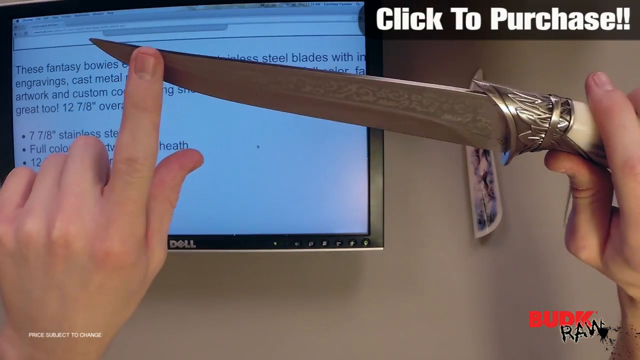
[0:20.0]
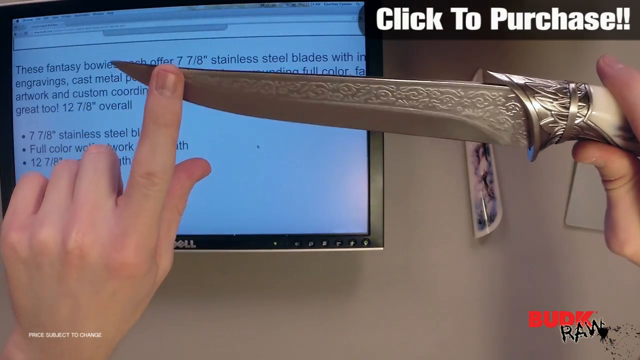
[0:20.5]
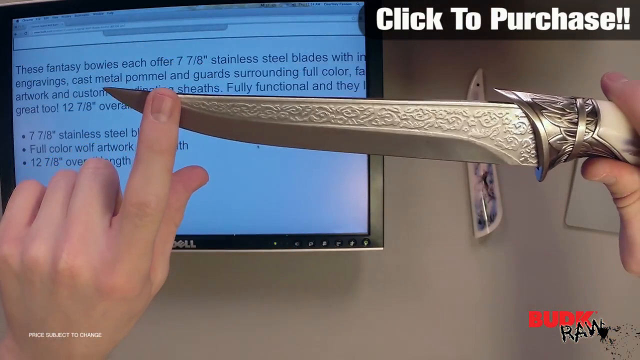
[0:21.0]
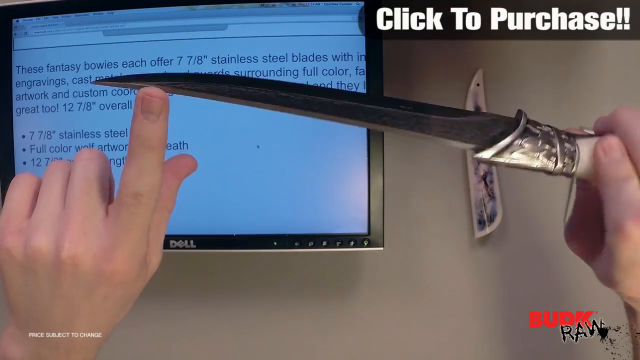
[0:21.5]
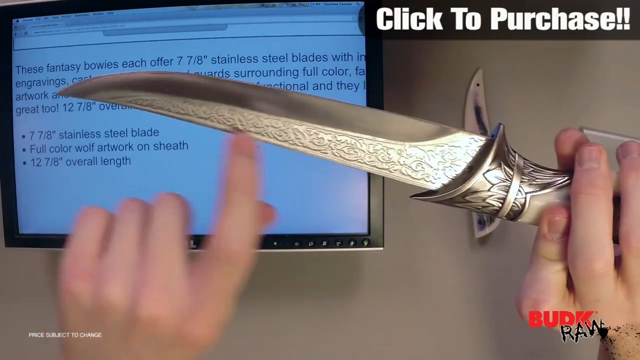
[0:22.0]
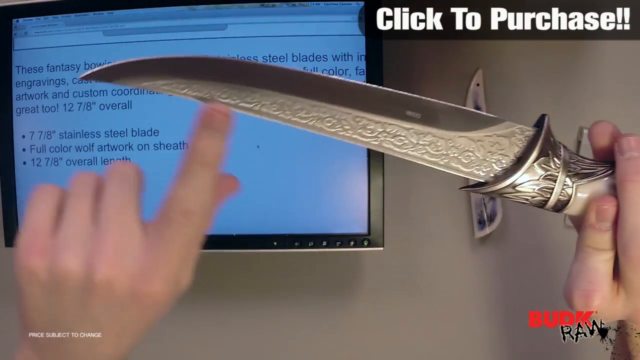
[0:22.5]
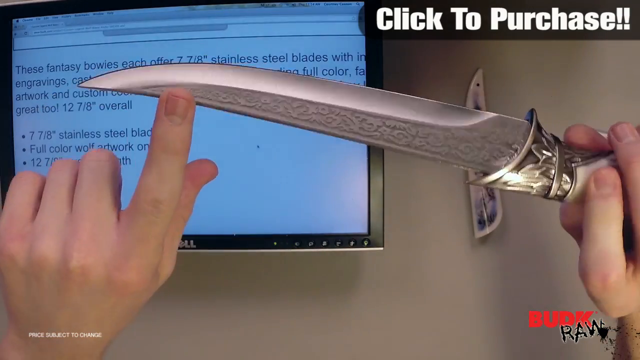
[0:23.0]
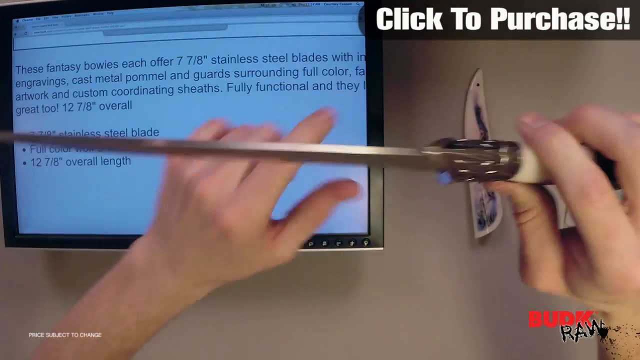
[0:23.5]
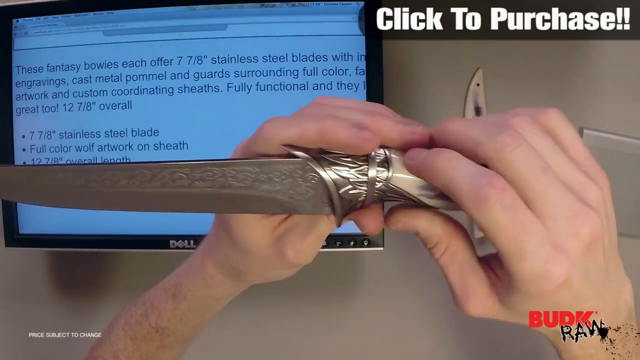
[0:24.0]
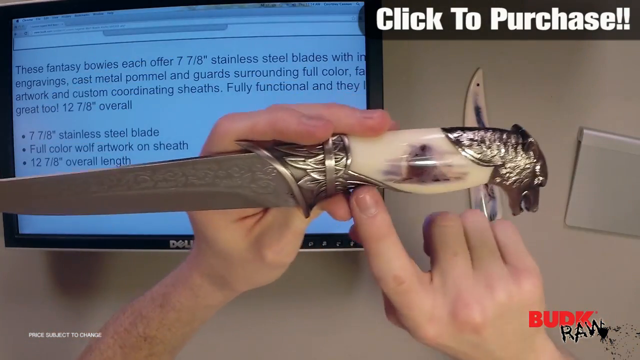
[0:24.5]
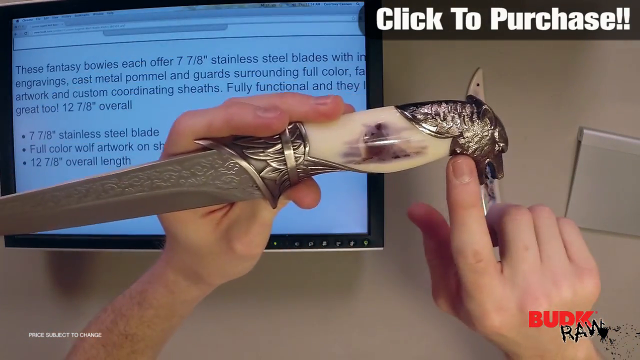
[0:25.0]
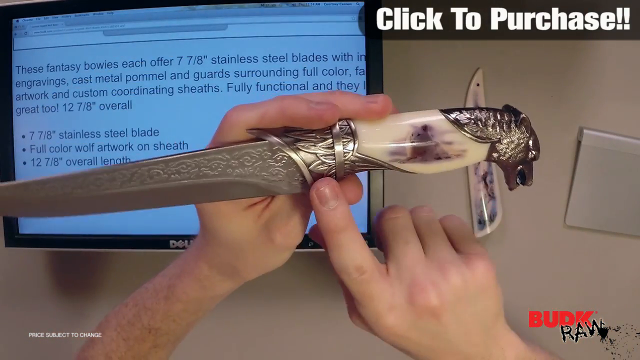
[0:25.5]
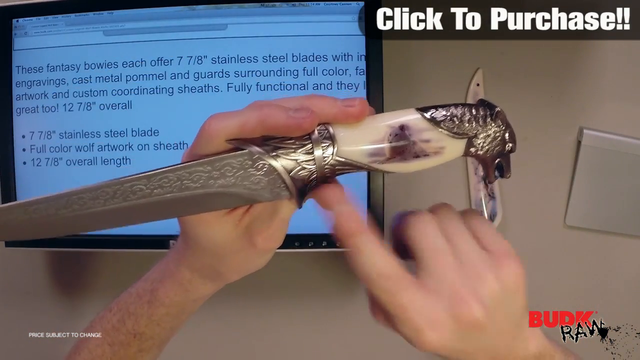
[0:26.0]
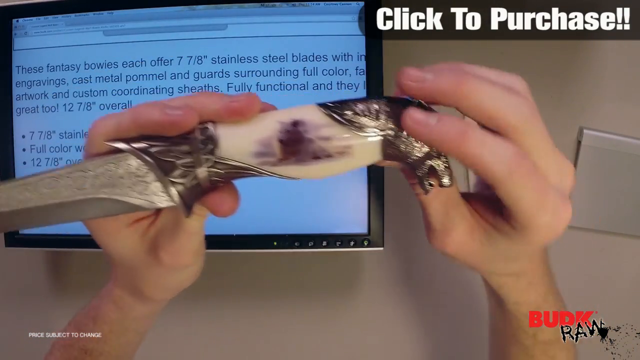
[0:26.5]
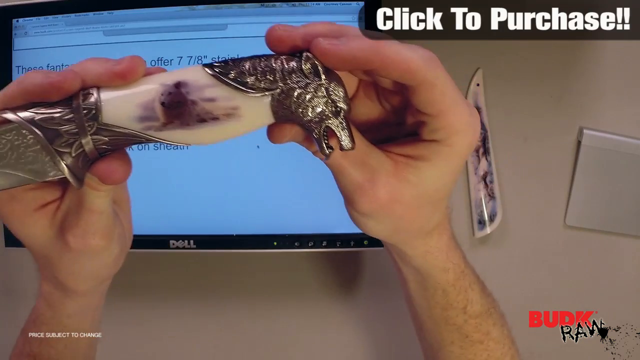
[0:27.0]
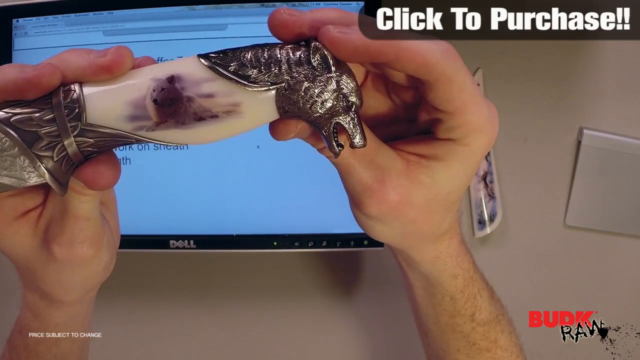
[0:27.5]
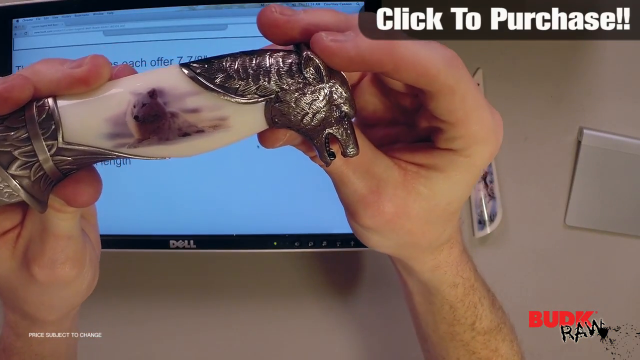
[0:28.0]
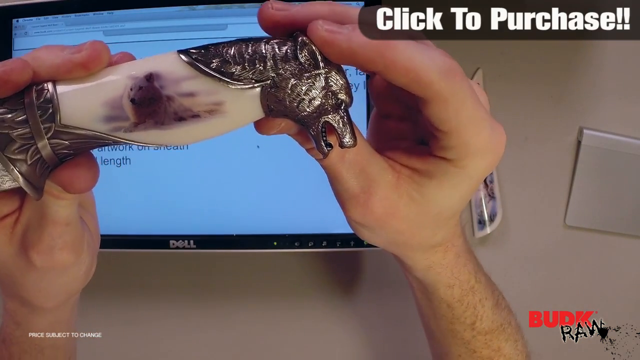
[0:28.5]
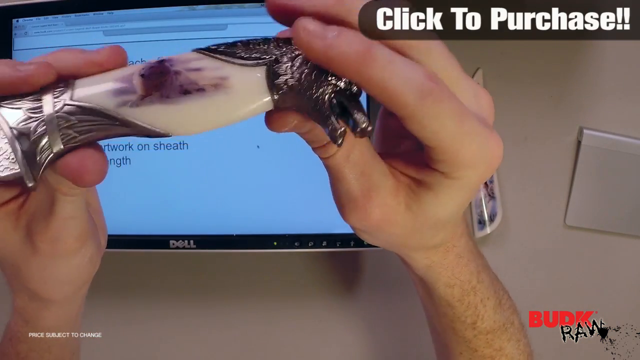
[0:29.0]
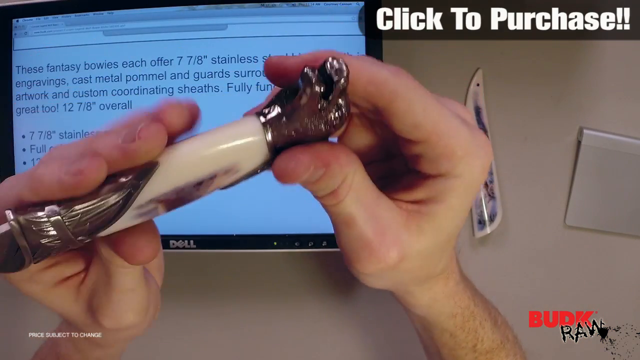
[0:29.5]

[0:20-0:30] The man continues showing the knife, showing what the metal is made of and showing the head of the knife, which has a wolf head design. The text "click to purchase" is on screen, so the knife is apparently for sale. The man appears to be in his late 20s or 30s.